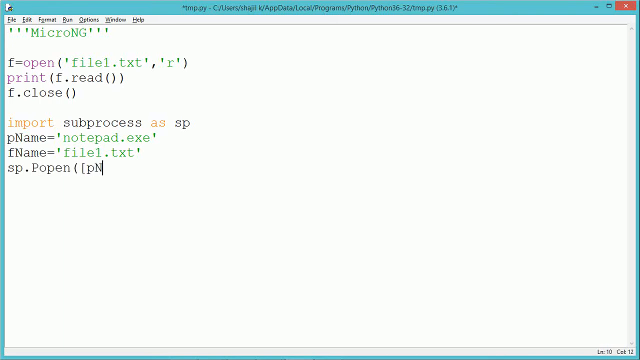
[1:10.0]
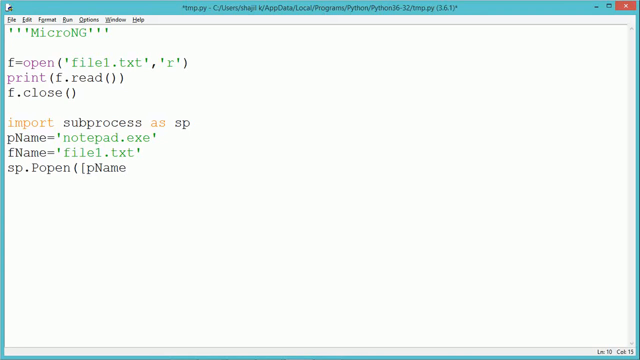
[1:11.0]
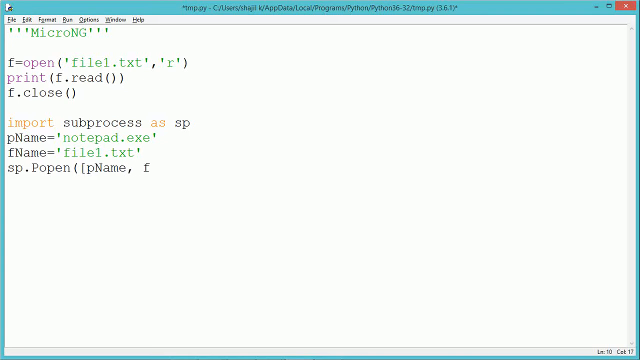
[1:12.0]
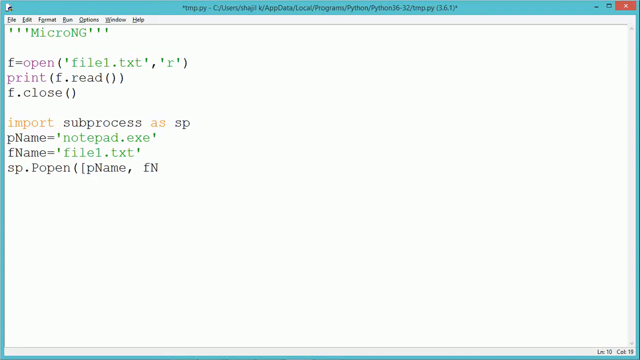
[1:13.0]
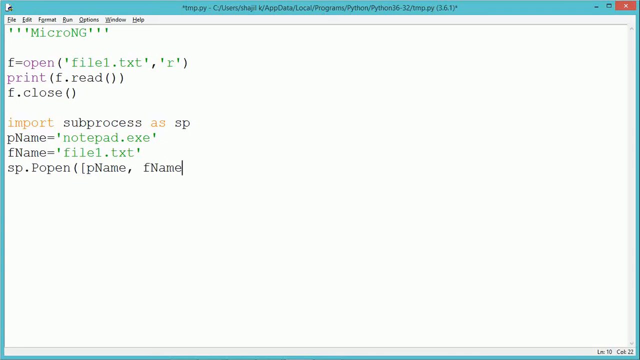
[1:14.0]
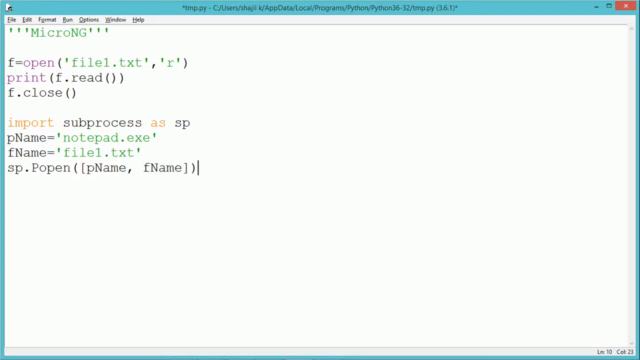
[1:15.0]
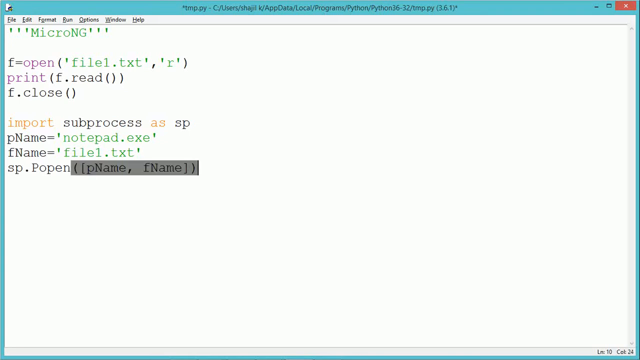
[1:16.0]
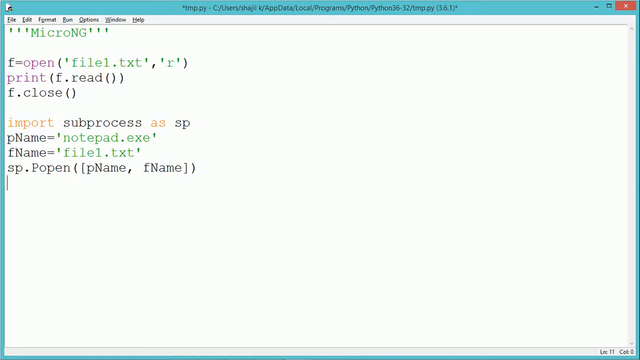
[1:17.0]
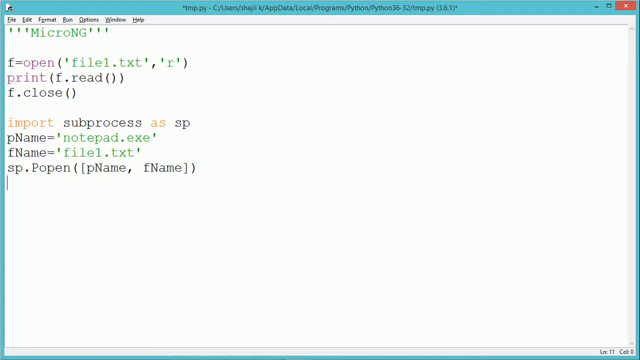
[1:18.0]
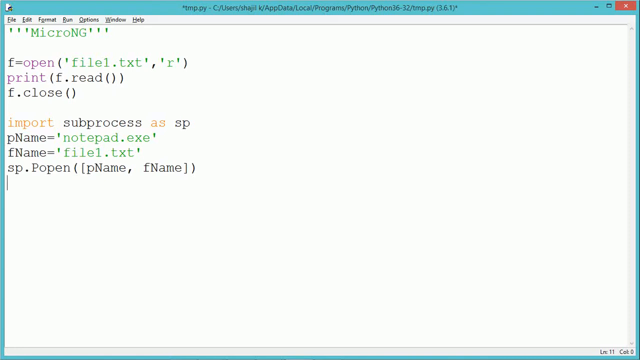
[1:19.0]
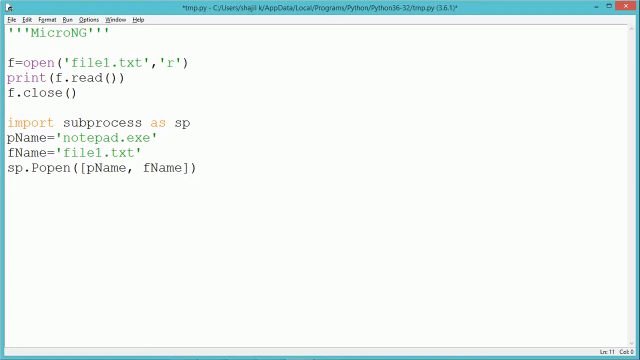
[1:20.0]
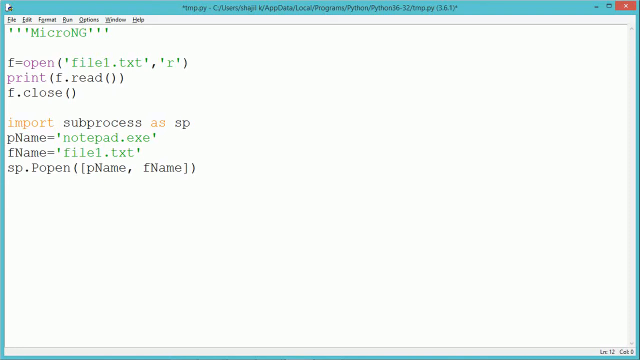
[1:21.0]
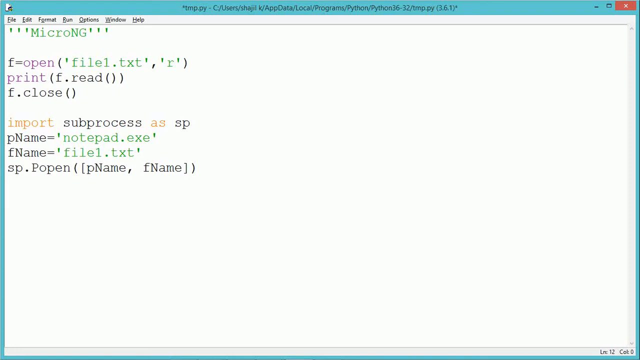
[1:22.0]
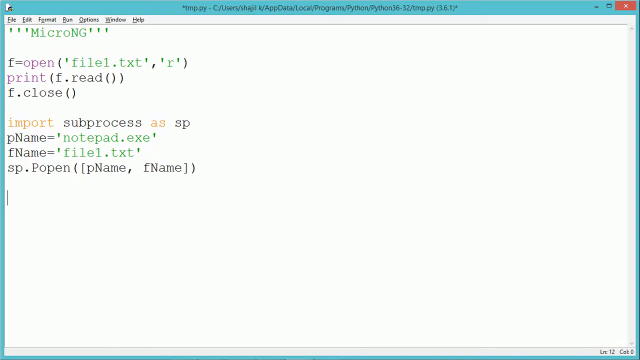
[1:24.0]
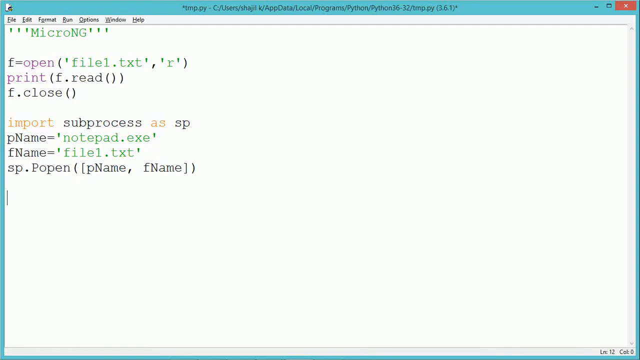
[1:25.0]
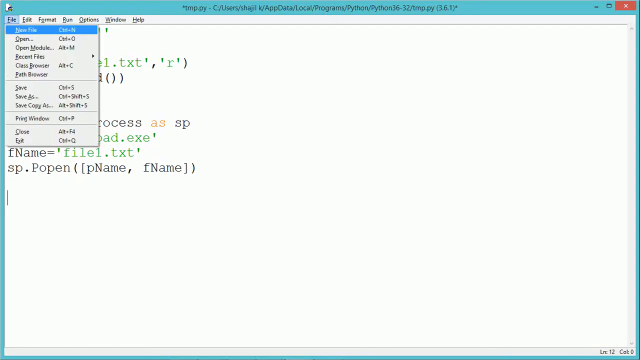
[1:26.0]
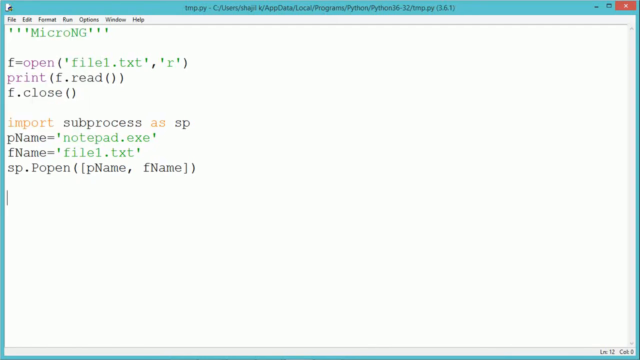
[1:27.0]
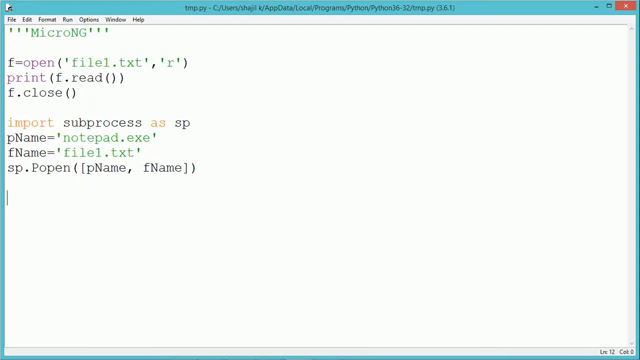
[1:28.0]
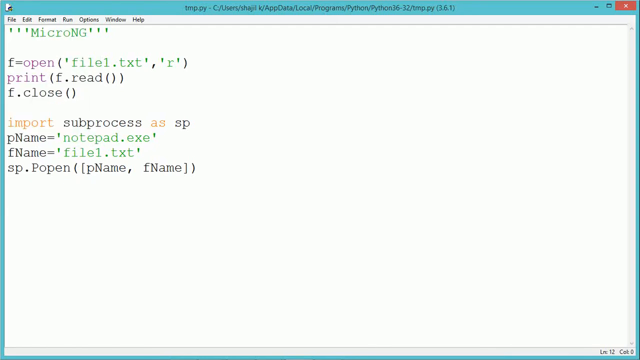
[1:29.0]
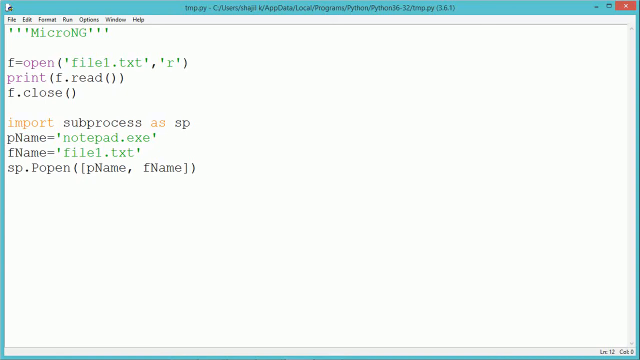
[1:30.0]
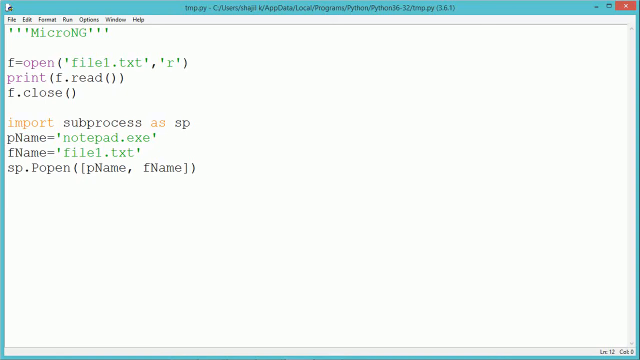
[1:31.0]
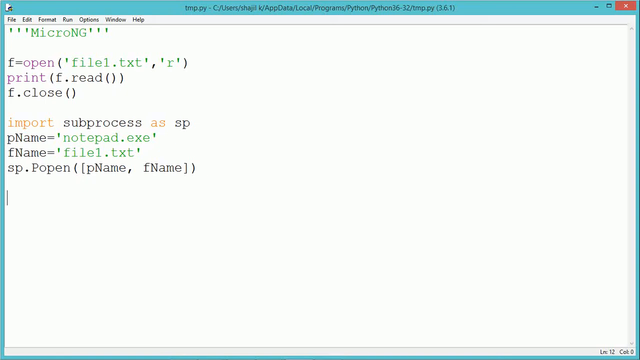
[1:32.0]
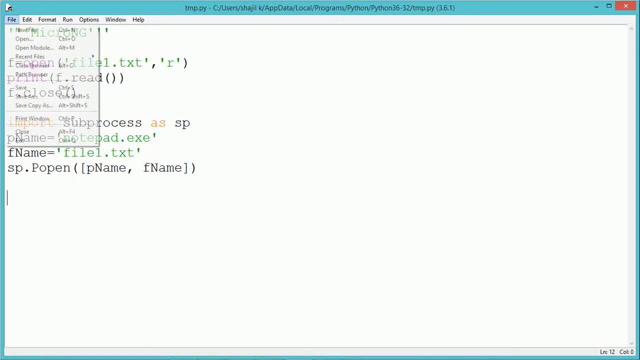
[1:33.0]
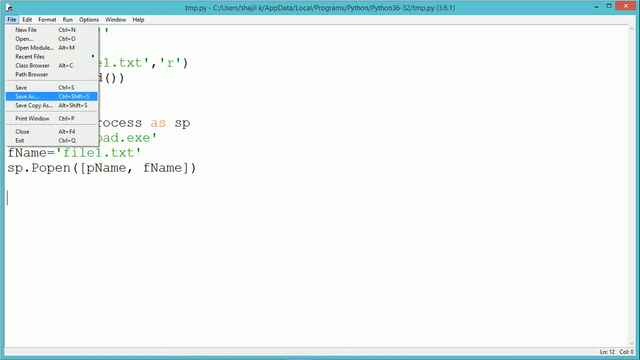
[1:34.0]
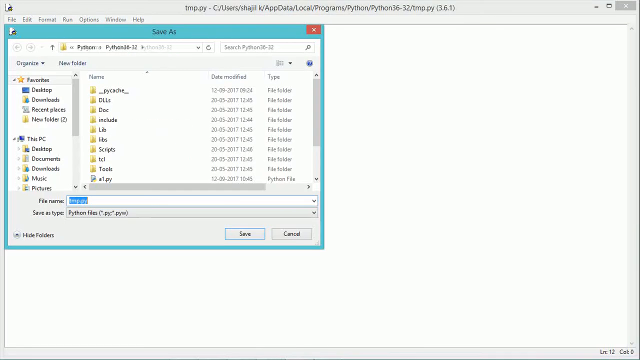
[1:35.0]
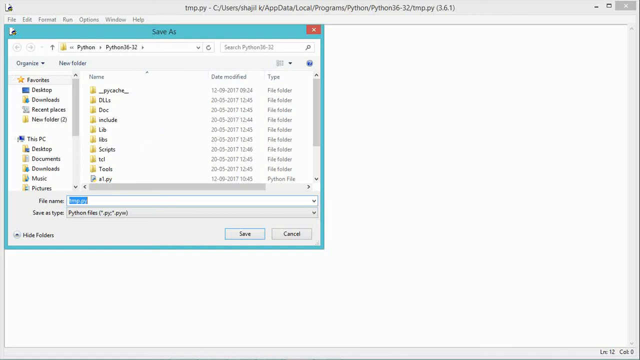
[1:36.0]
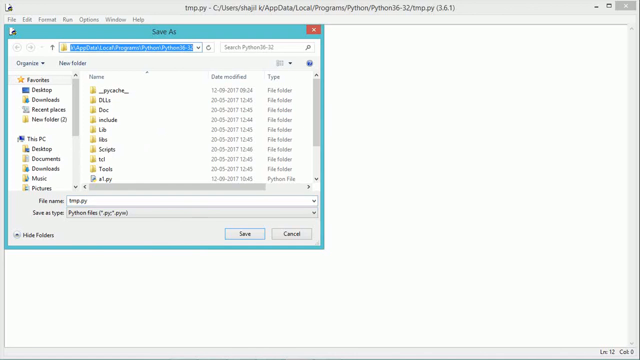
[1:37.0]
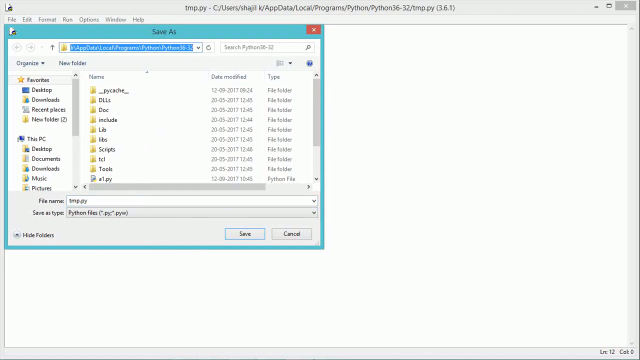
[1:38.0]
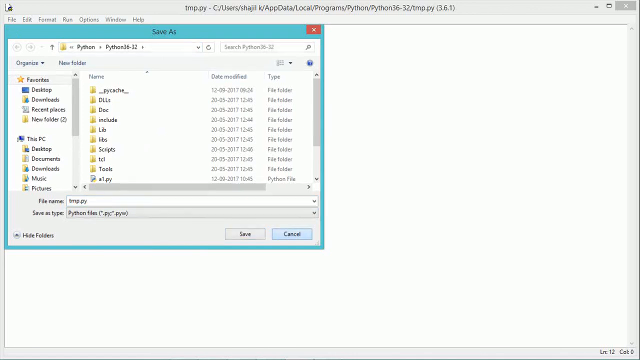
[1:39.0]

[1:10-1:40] The user enters another line of code using sp.popen with pname and fname, which opens the Notepad application with file1.txt. The user moves the mouse cursor to the top left and clicks the File menu, which shows options including New File, Open, Open Module, Recent Files, Class Browser, Path Browser, Save, Save As, Save Copy As, Print Window, Close and Exit. The user hovers over Save As, and a file explorer save dialog appears. It says "Save As", and the file name is tmp.py, a Python file. Other items are visible in the file explorer, such as dlls, doc, include, lib, libs, script, txl and tools, starting with folders; the files are apparently sorted by date modified, and different dates are shown for each file.